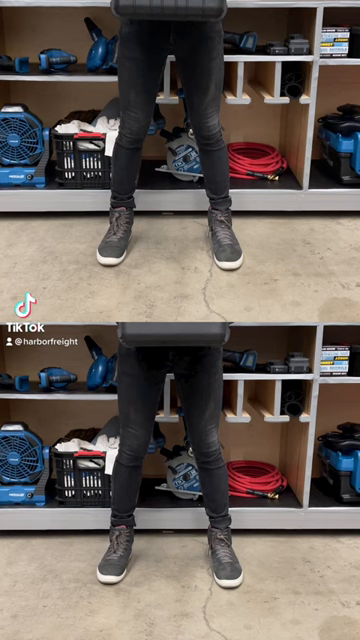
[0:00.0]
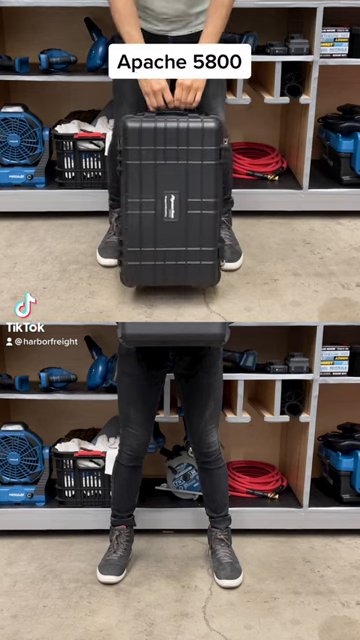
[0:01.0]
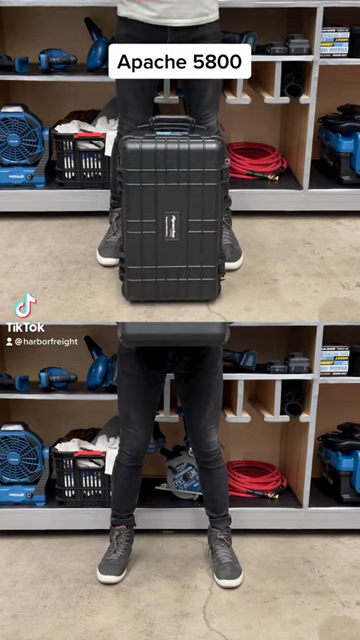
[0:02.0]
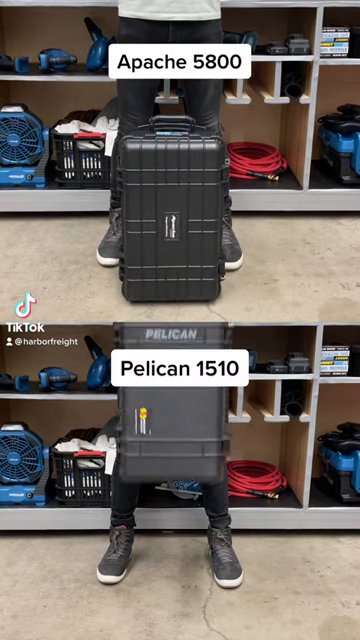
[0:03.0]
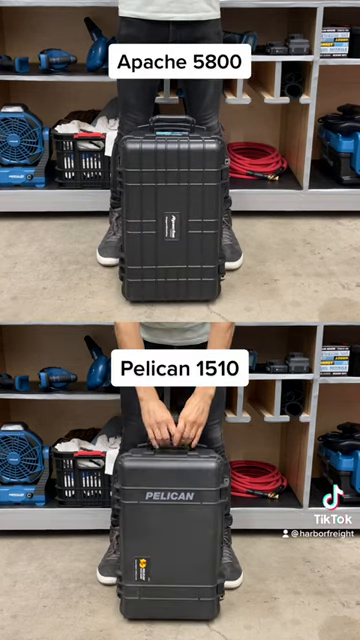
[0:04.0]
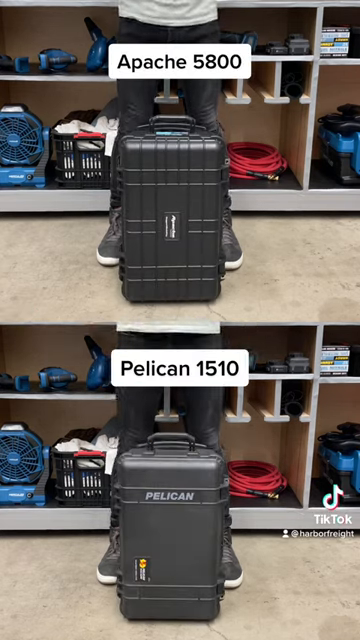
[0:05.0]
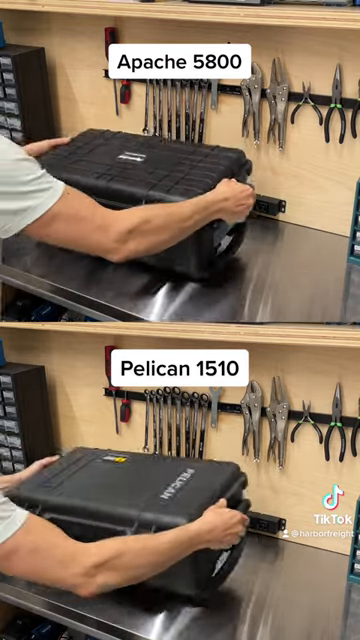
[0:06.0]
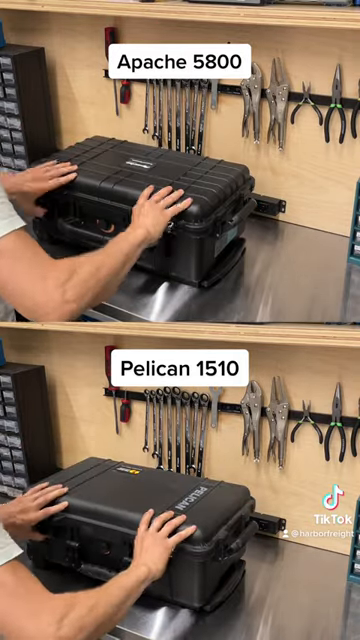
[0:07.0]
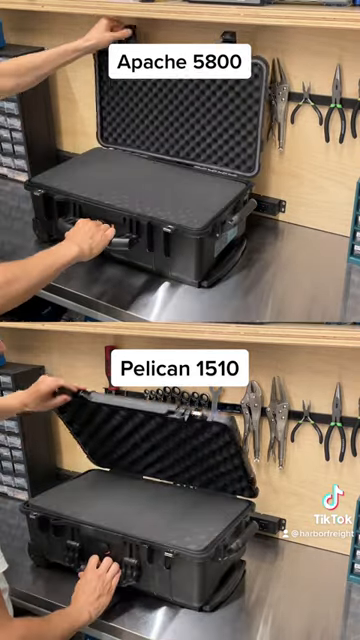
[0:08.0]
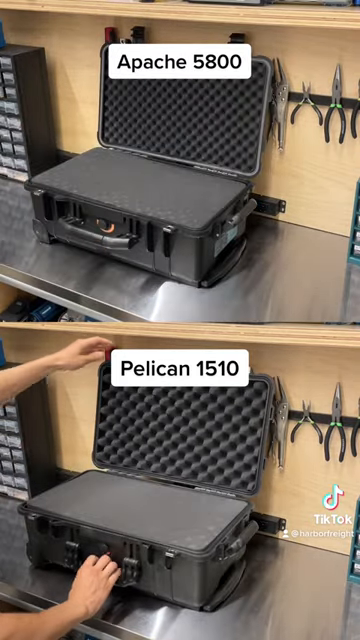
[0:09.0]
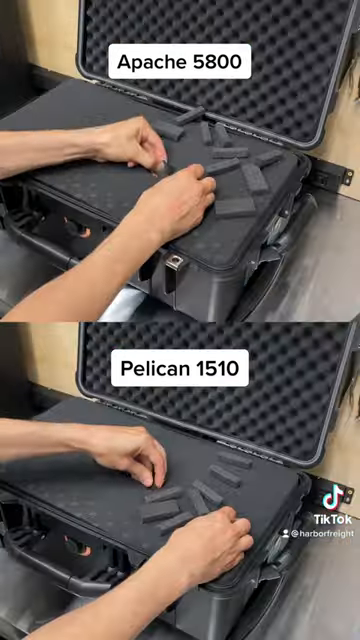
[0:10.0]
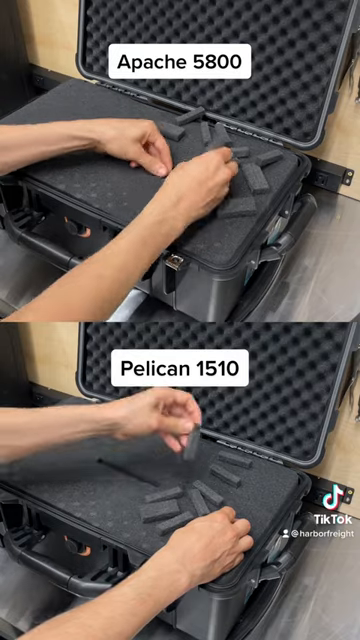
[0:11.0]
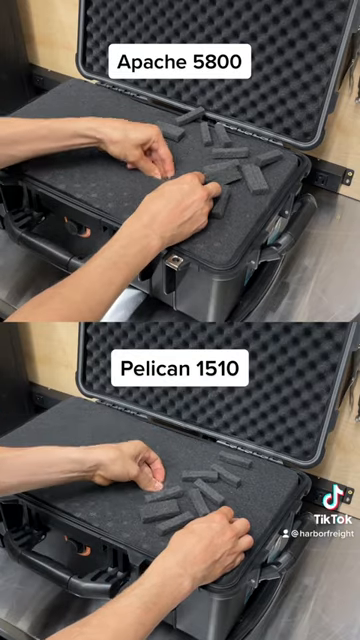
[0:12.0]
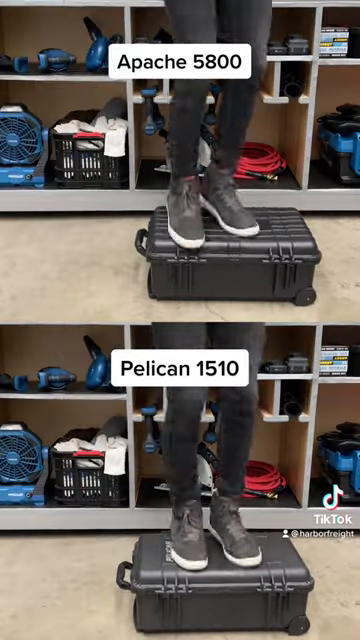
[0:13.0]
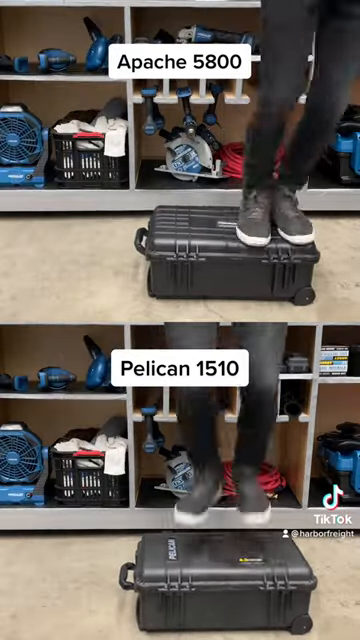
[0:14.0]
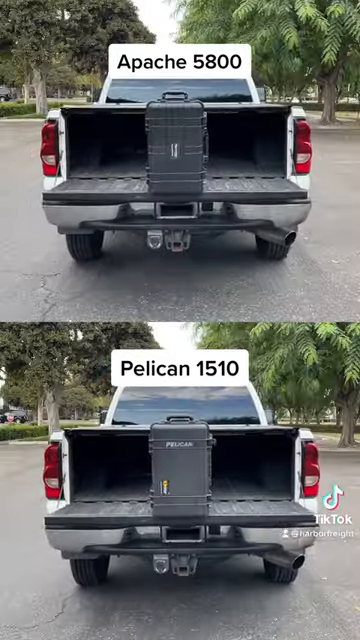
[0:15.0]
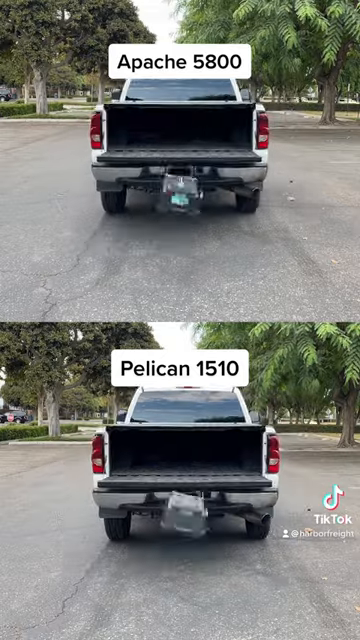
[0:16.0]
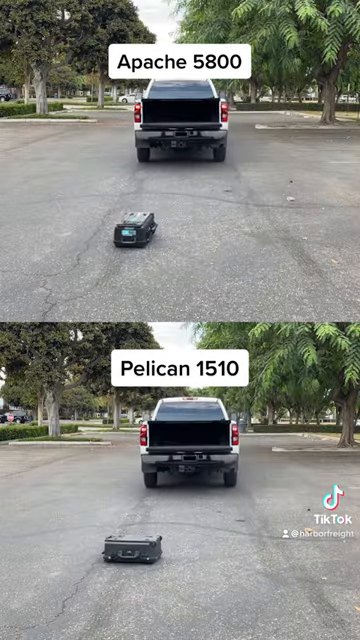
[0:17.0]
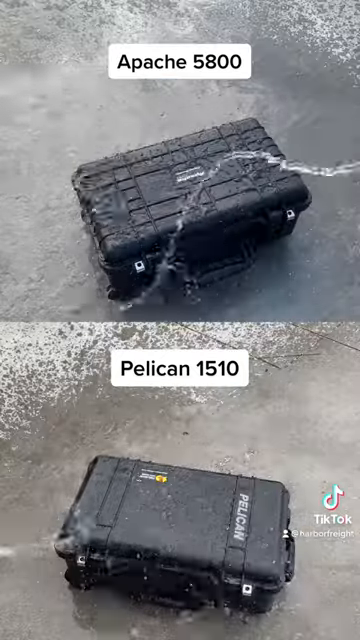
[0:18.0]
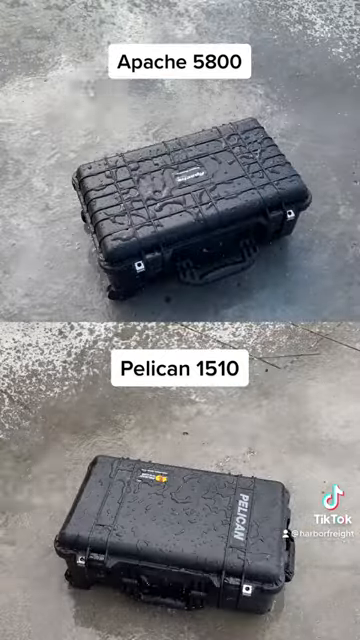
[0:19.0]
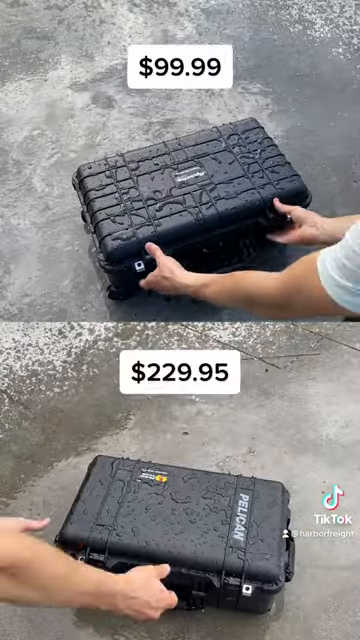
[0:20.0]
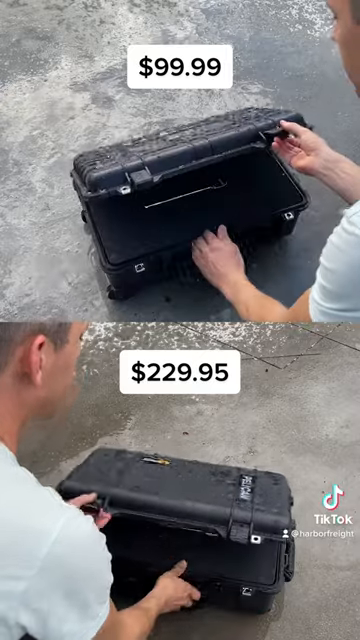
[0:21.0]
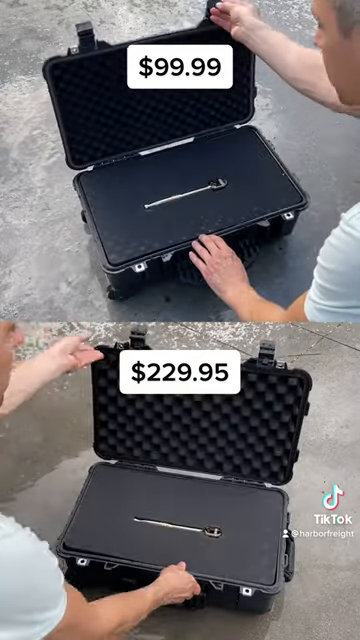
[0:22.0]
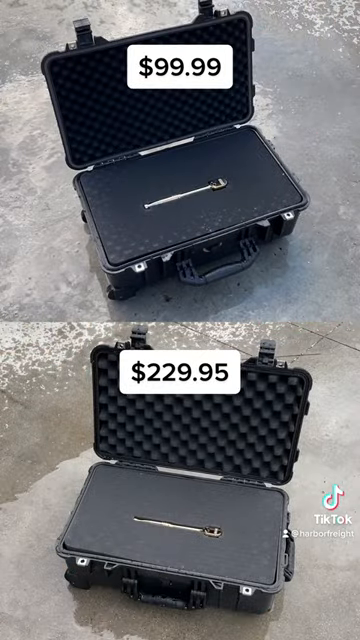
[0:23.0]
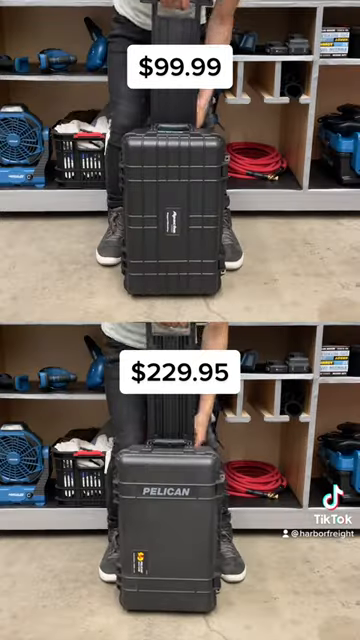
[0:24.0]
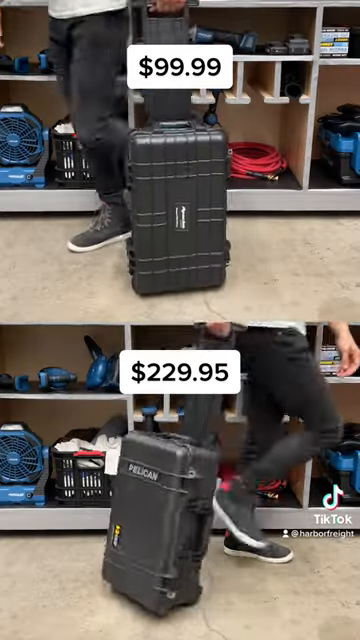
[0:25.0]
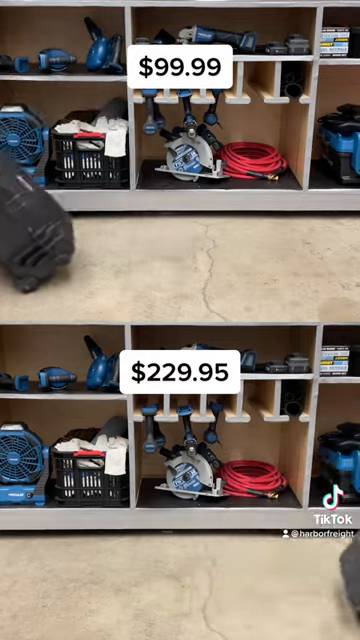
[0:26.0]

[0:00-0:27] The video appears to be published by Harbour Freight; when the mouse hovers over the channel avatar, a pop-out shows Harbour Freight with 130k subscribers and an option to subscribe to the channel. The video apparently aims to compare the sturdiness of two different carry-ons, putting them through a variety of tests in identical settings with the same person handling them. The screen is split into top and bottom boxes, and the tests run simultaneously in both. The case in the top box is the Apache 5800, and the one on the bottom is the Pelican 1510. Both carry-ons are black and similar in size. The person handling them appears to be a white male wearing a t-shirt, jeans, and black sneakers with white bottoms. The setting first looks like a store's luggage display, with a whole bunch of luggage in it. The person holds the cases in his hands, then lowers them to the ground for a long shot showing how similar they look. Next, at a workbench, he places them on the same shiny work surface, opens them up, and pulls out some of the padding inside. The next shot shows him jumping up and down on them. Both cases are then loaded into the same pickup truck; the truck pulls away and both hit the ground. In a driveway, both are sprayed with water. A shot then shows the relative pricing of each: the Apache at $99.99 and the Pelican at $229.95. After that, the cases are rolled out of the shot, the Apache to the left and the Pelican to the right. In every test, the settings, motions, and actions of the person on the two carry-ons are identical, with little to no difference, and throughout the video the similarity of the treatment of the two cases is very noticeable.